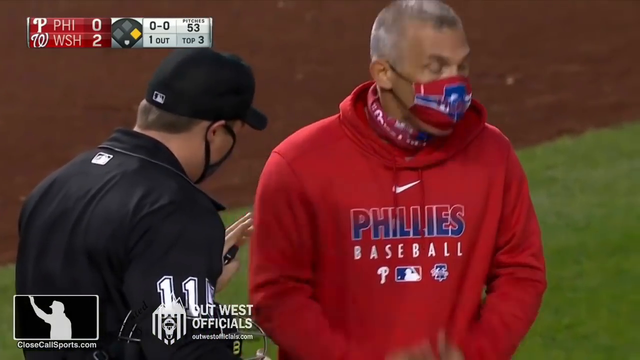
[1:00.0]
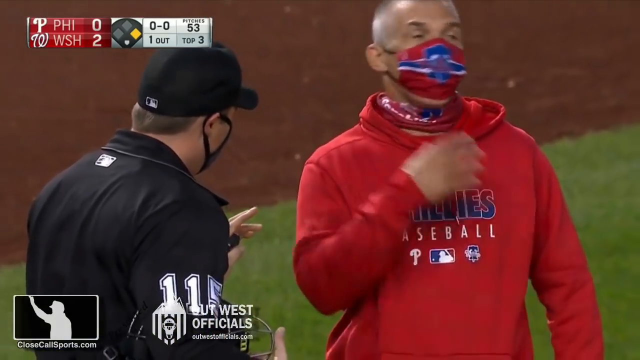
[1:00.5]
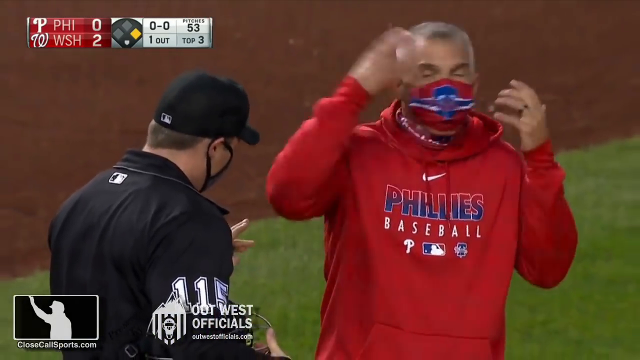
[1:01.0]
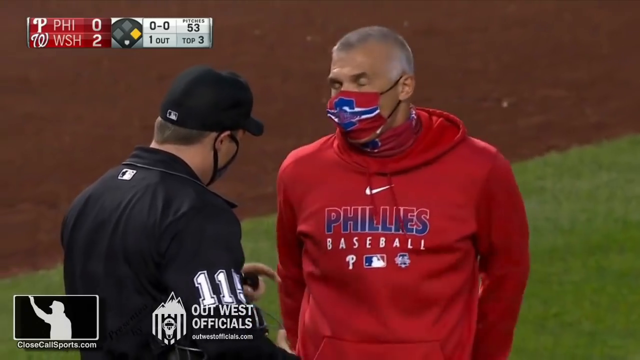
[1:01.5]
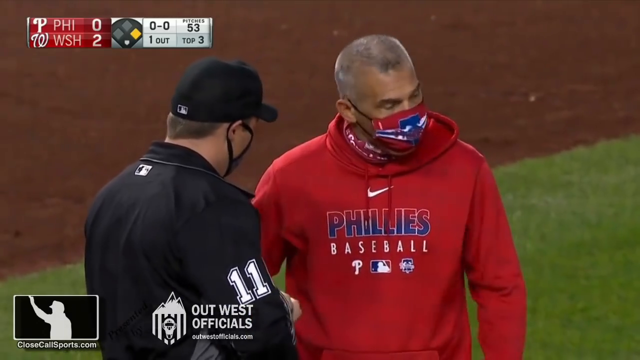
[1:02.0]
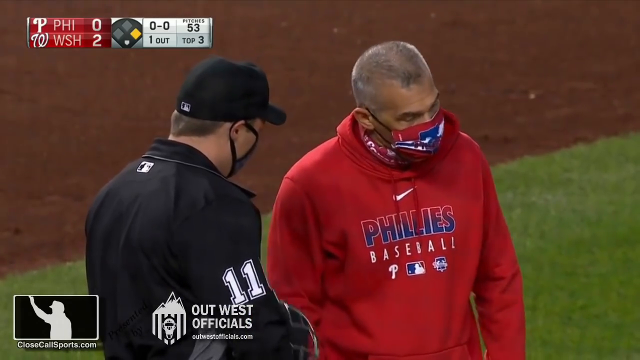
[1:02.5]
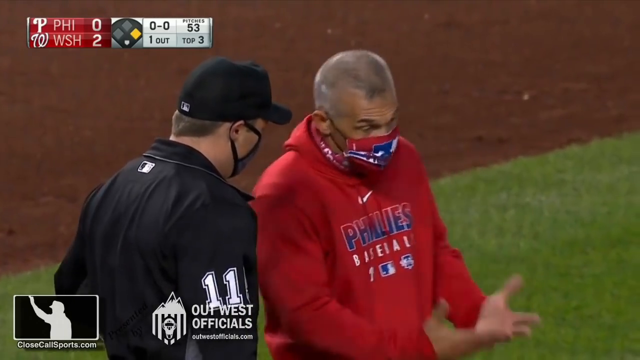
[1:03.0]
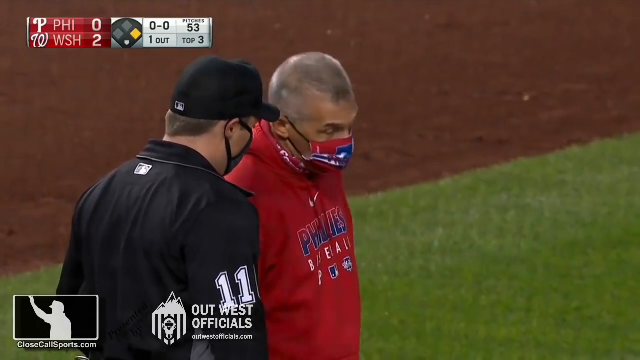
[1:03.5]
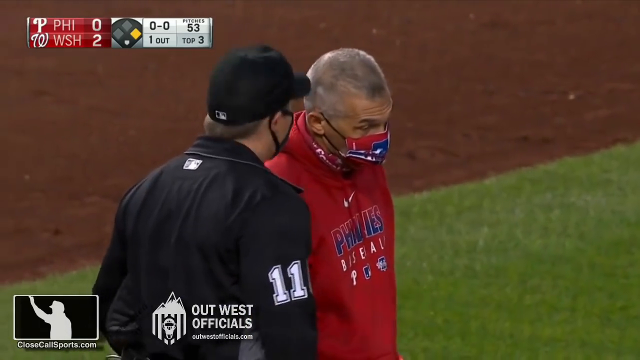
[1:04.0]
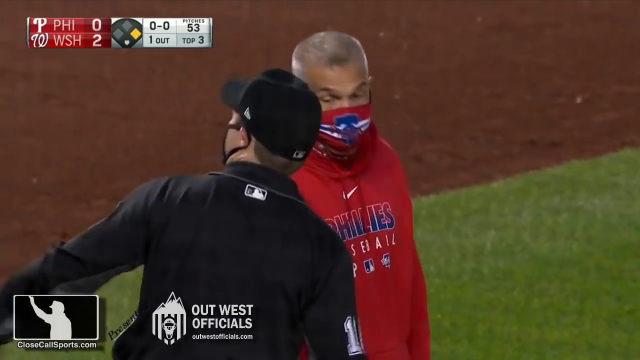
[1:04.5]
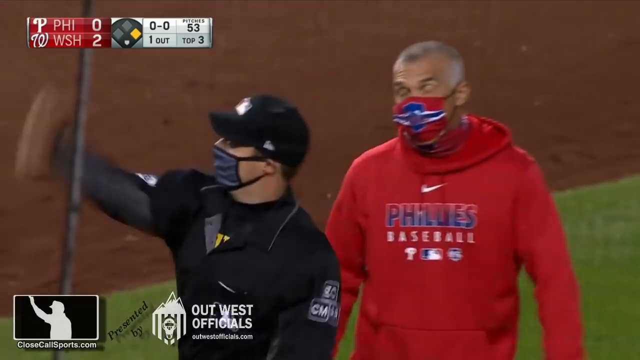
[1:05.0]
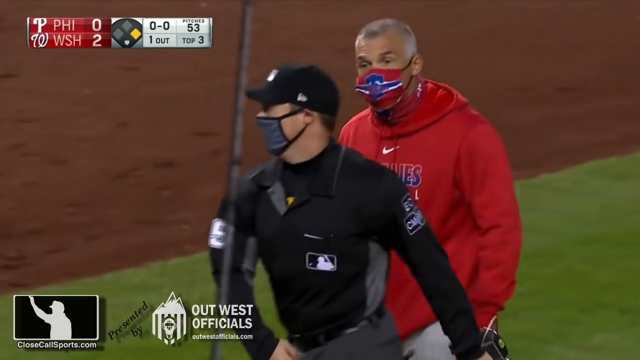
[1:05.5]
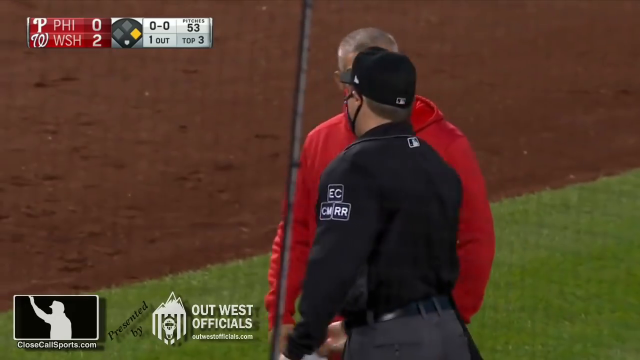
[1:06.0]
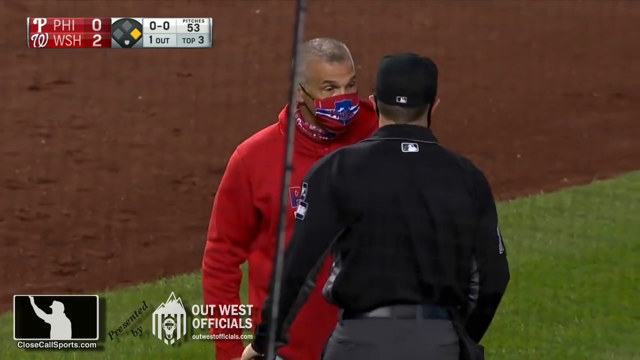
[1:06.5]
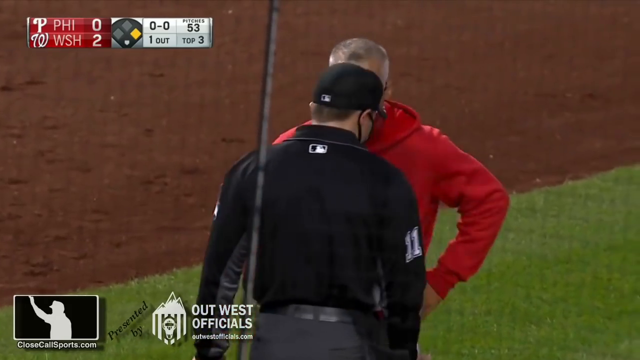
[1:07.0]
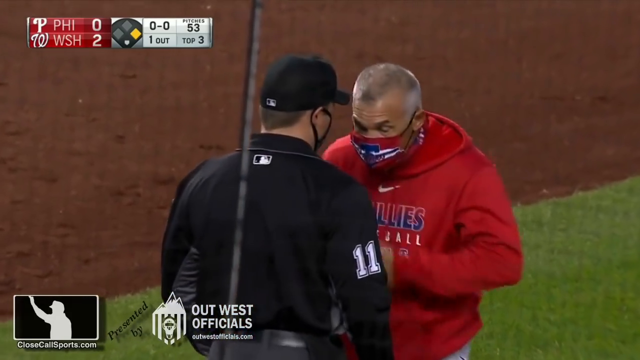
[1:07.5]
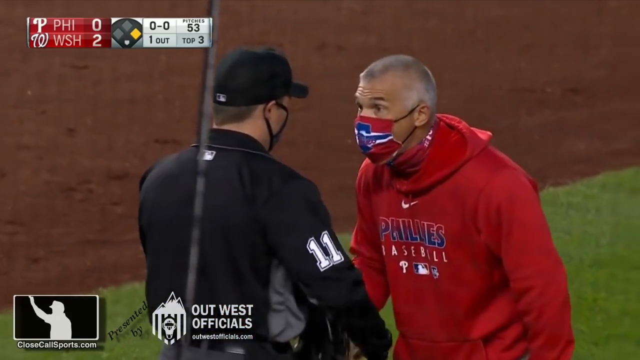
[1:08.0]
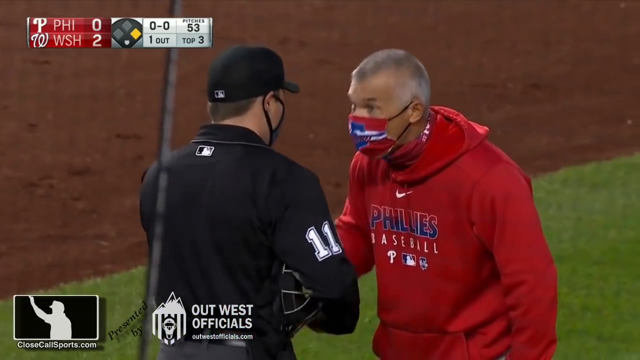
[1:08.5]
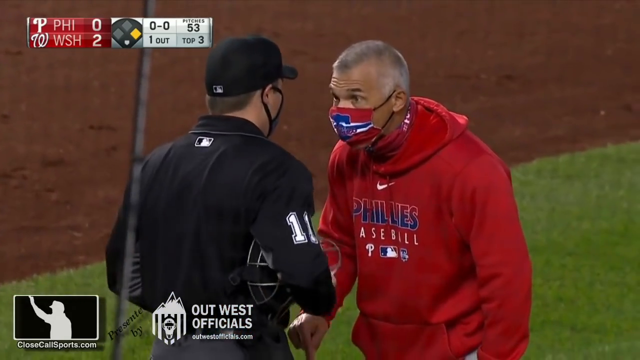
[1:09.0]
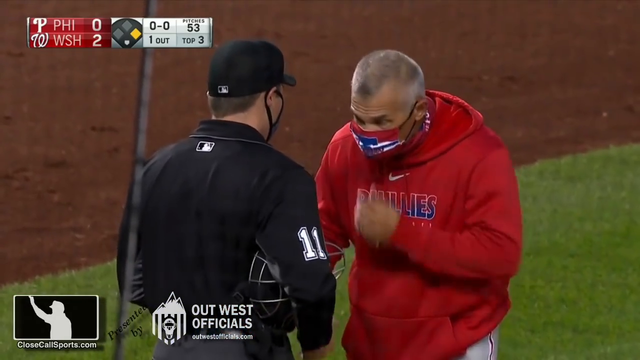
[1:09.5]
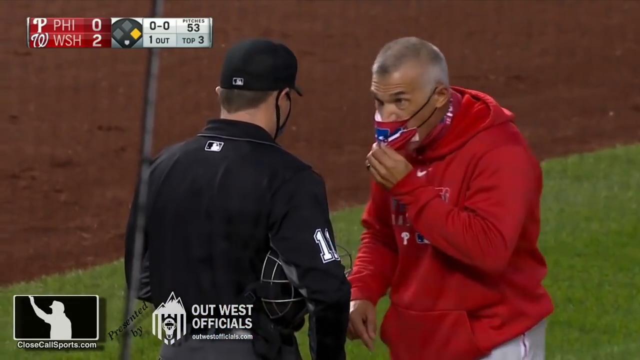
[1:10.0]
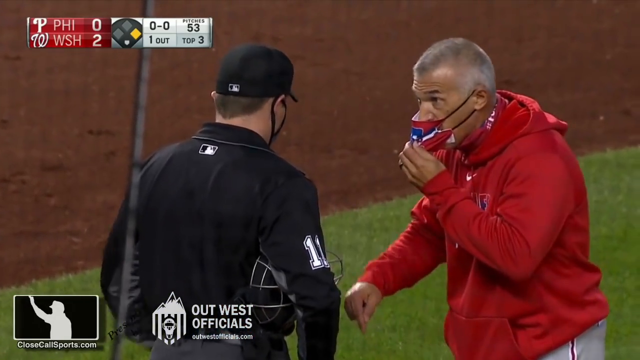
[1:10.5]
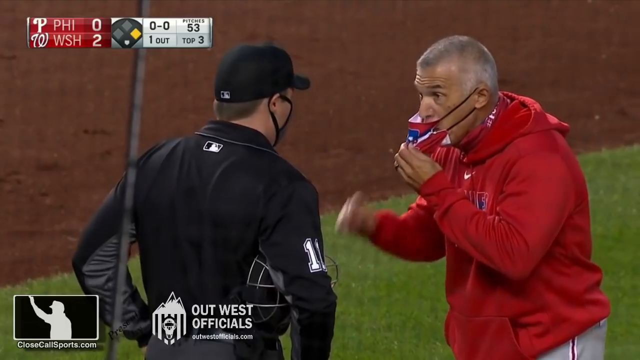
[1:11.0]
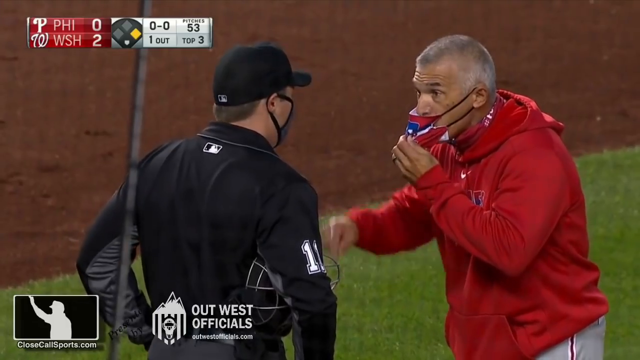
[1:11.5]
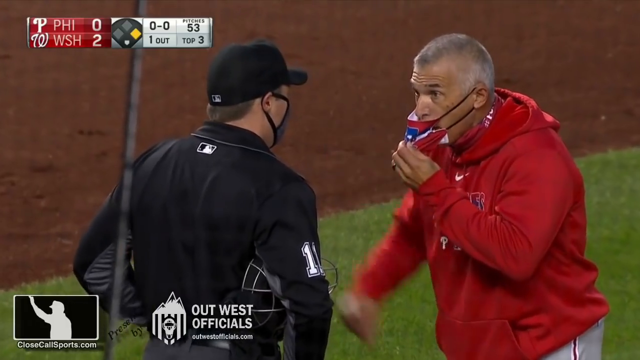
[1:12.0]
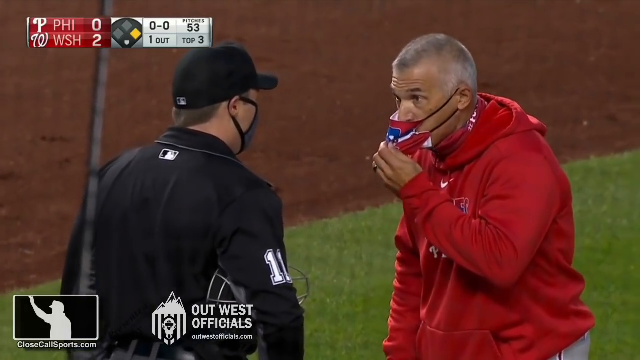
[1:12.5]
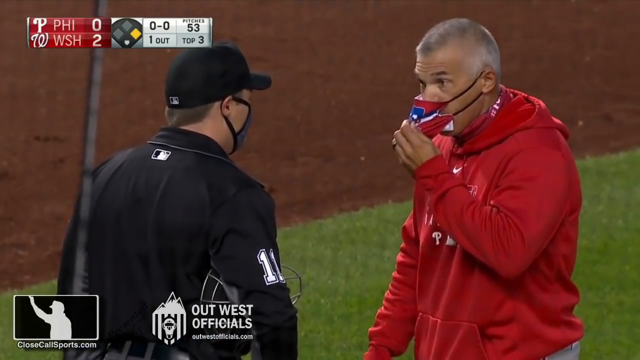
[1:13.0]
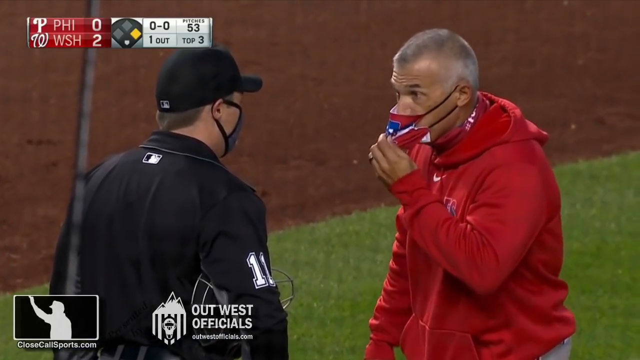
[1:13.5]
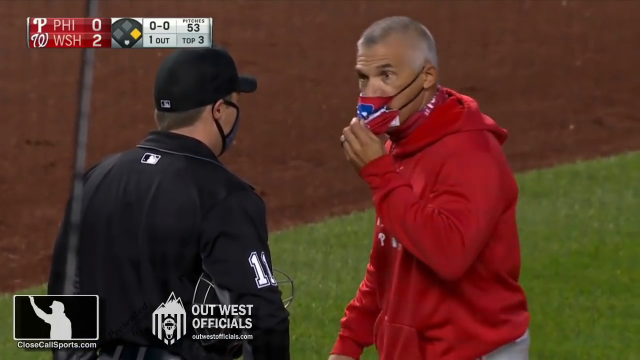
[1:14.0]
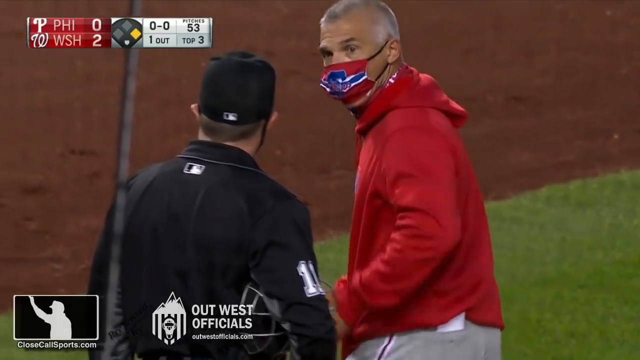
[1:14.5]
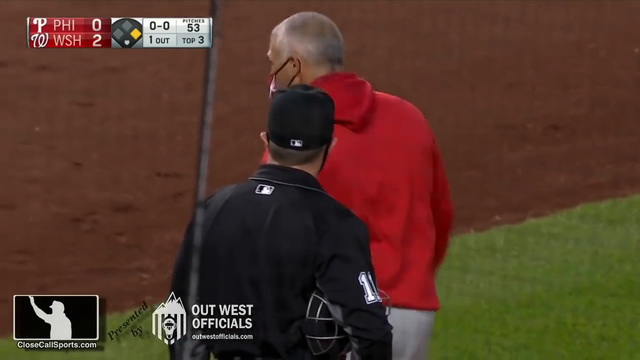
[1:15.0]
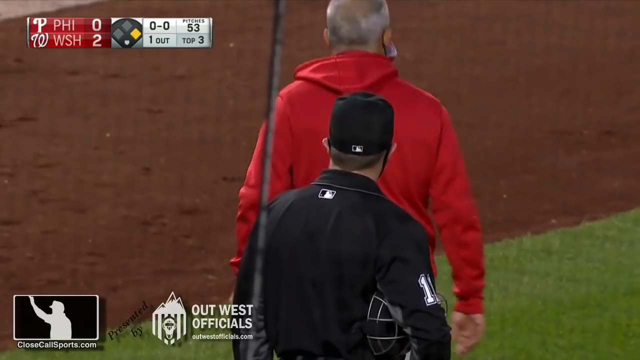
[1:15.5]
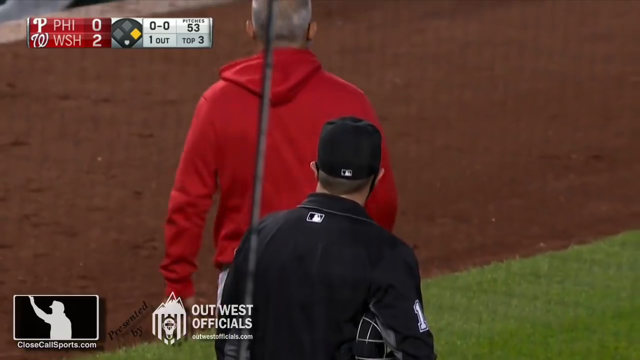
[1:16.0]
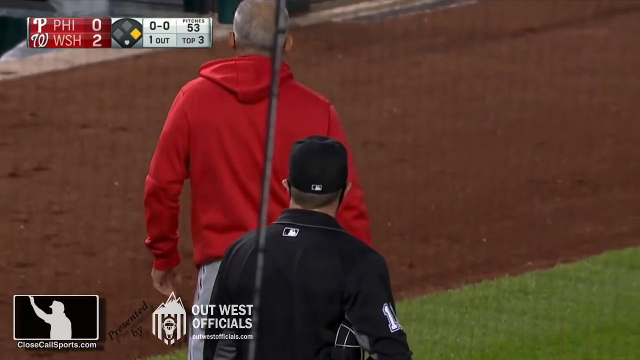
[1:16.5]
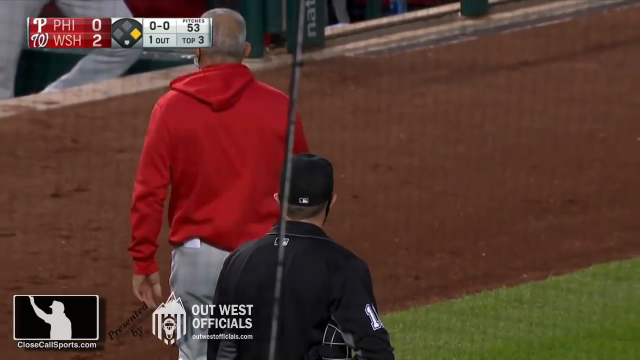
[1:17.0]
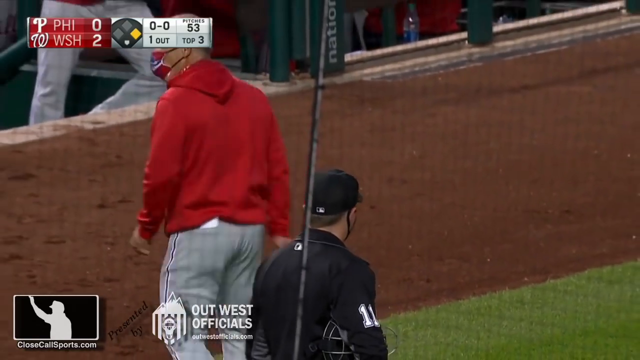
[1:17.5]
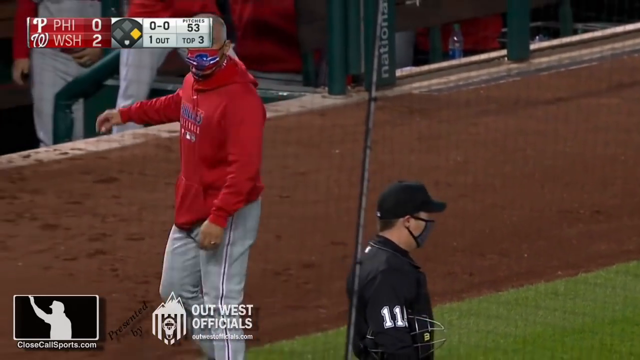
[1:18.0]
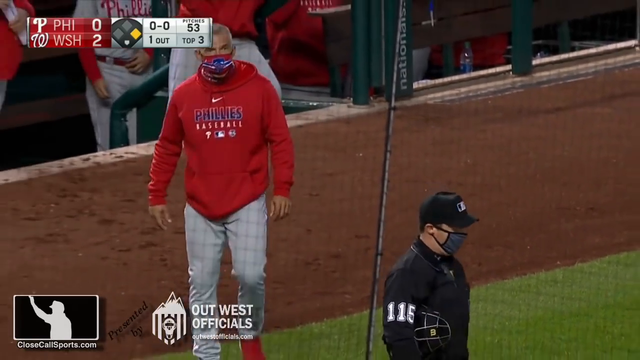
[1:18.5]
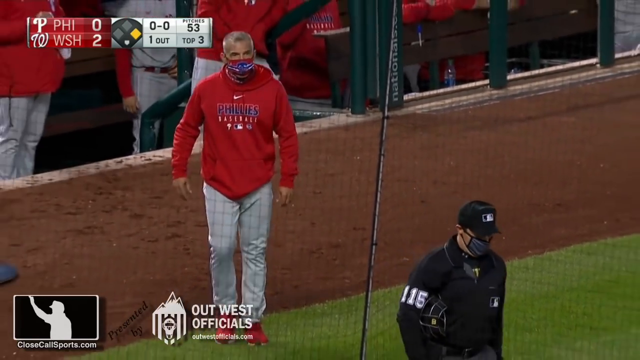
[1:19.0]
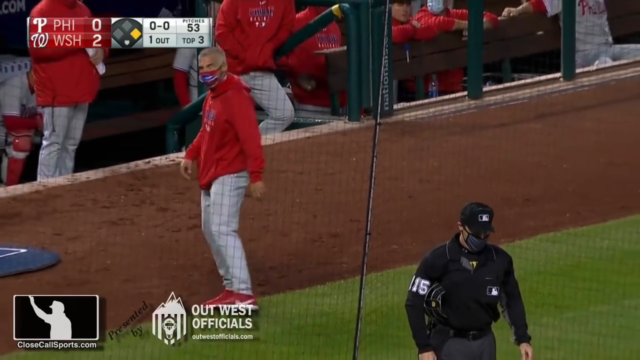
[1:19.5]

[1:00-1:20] A baseball umpire talks with a Phillies coach who wears a red, white and blue mask and a sweatshirt that says "Phillies baseball". The coach seems pretty upset and uses his hands while talking to the umpire. The umpire throws something, and it is unclear whether the coach is being penalized or thrown out. The coach walks off but turns around, seemingly upset, and keeps talking to the umpire, who has also become upset. The score shows Washington 2, Phillies 0, now with one out, along with 0-0, 53, and top 3.